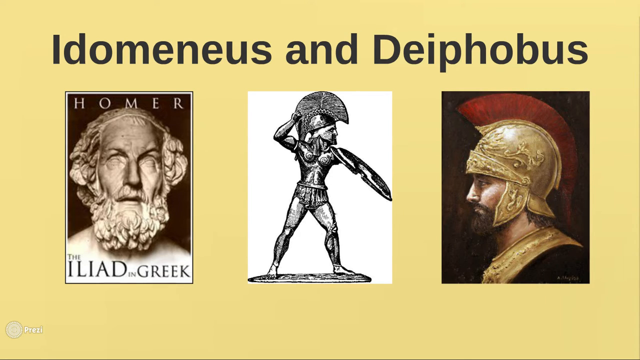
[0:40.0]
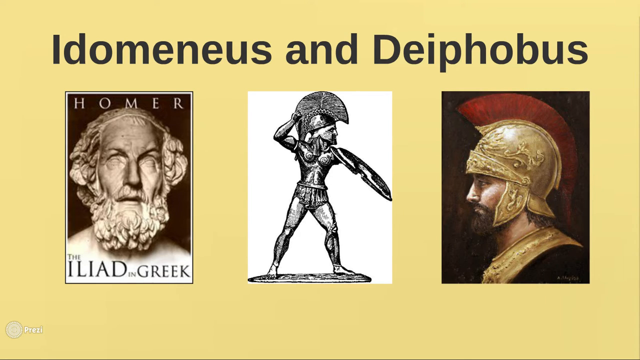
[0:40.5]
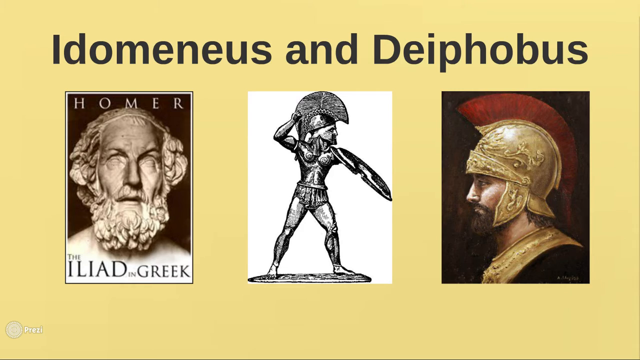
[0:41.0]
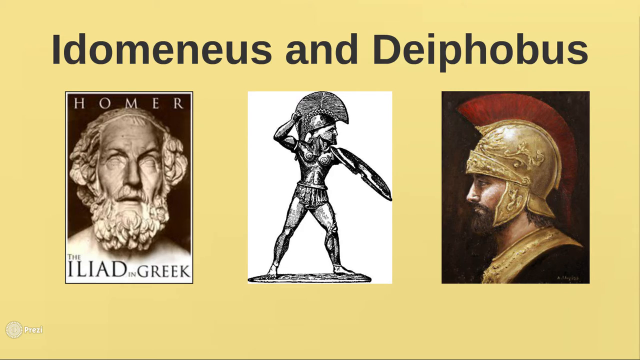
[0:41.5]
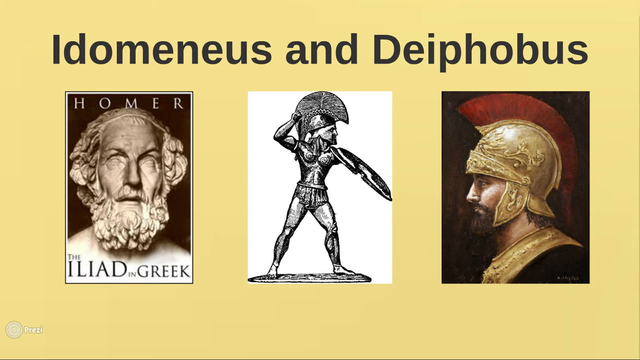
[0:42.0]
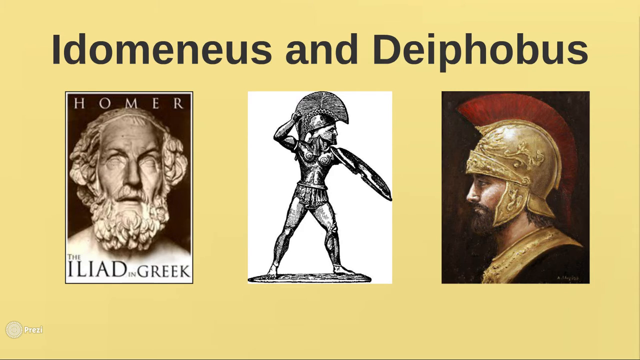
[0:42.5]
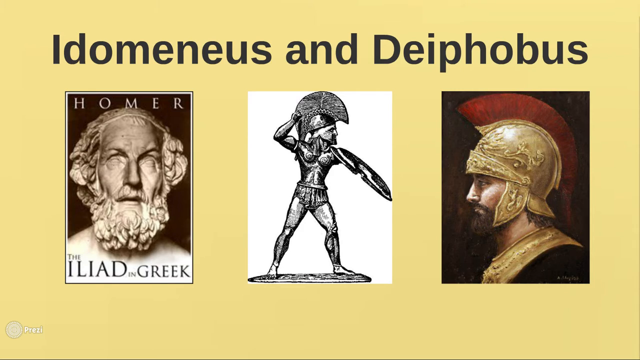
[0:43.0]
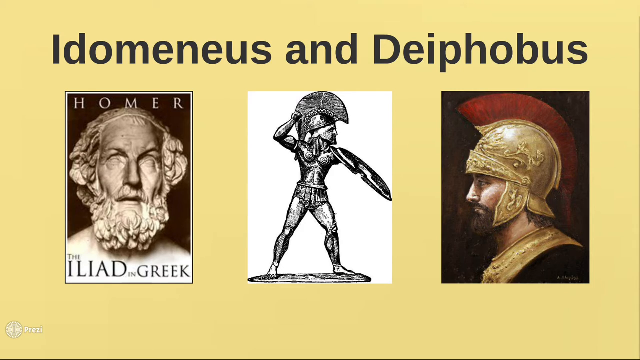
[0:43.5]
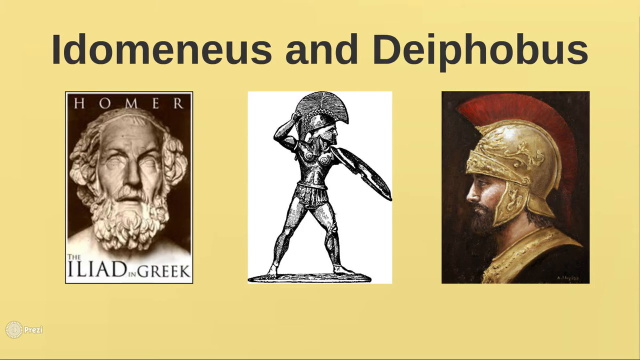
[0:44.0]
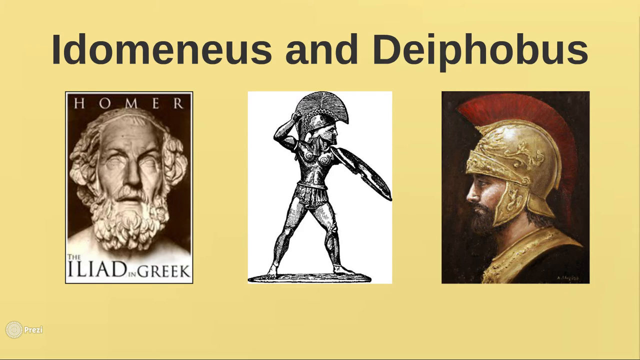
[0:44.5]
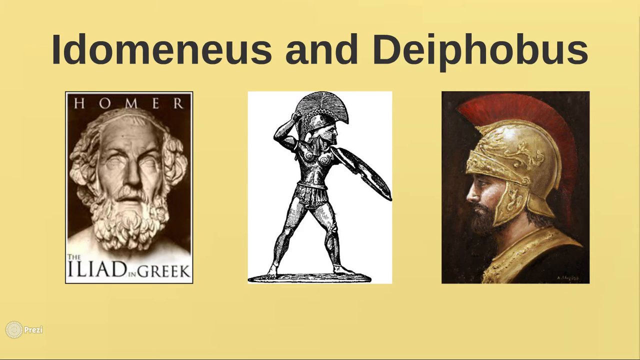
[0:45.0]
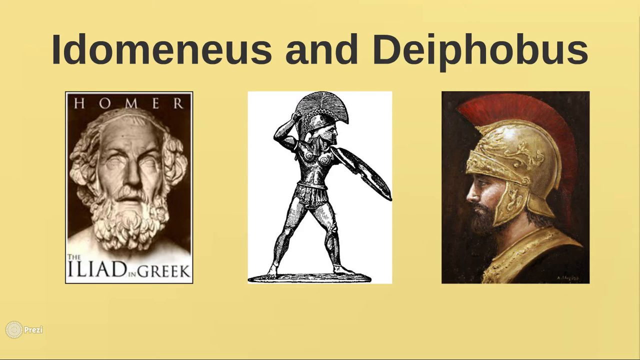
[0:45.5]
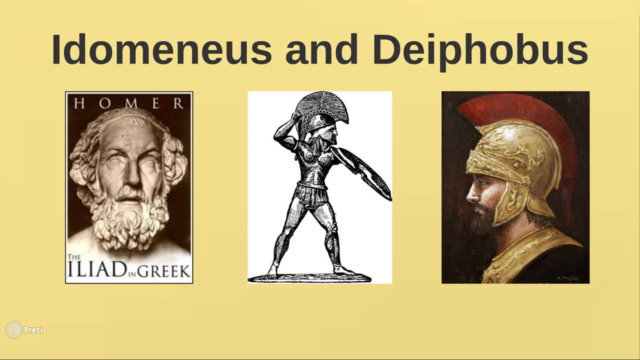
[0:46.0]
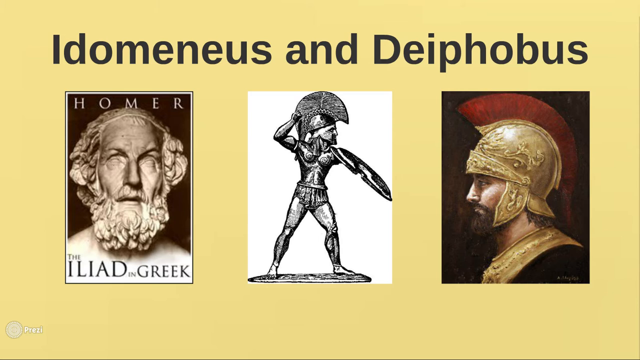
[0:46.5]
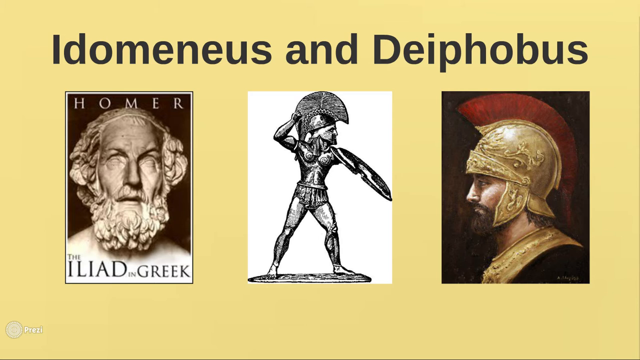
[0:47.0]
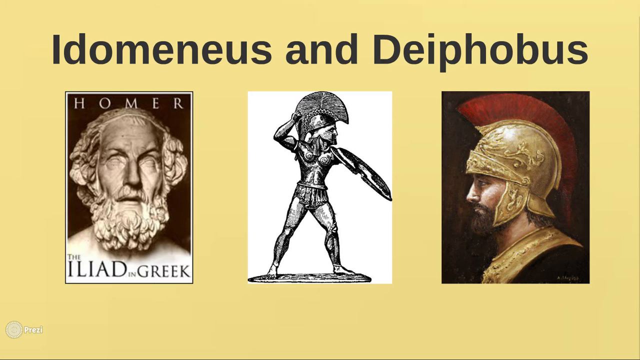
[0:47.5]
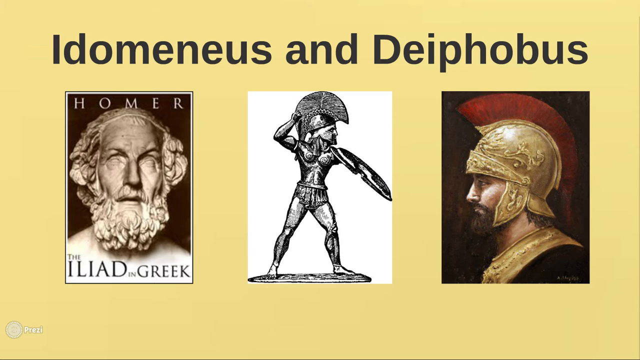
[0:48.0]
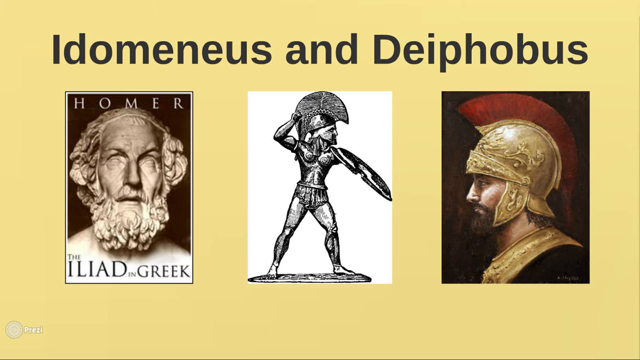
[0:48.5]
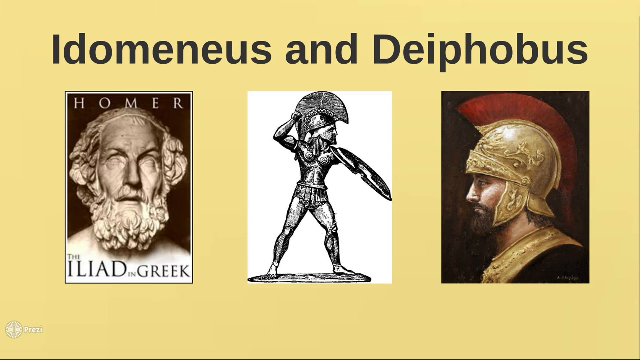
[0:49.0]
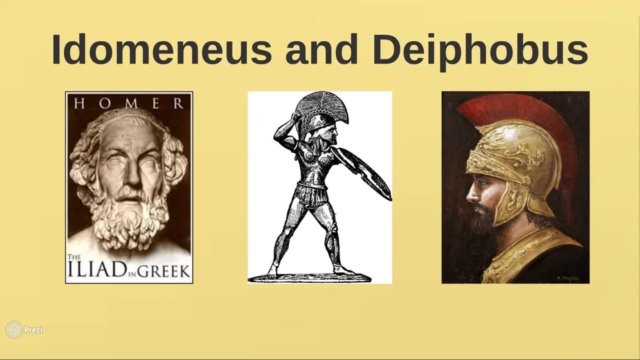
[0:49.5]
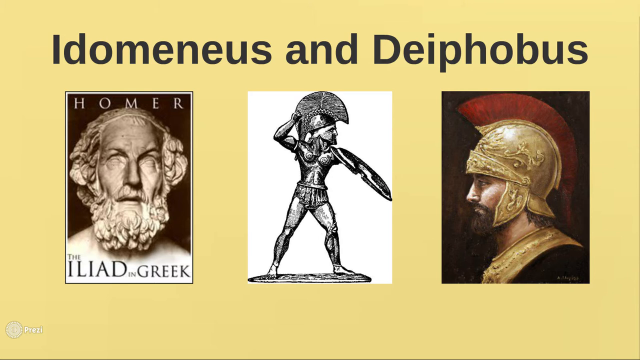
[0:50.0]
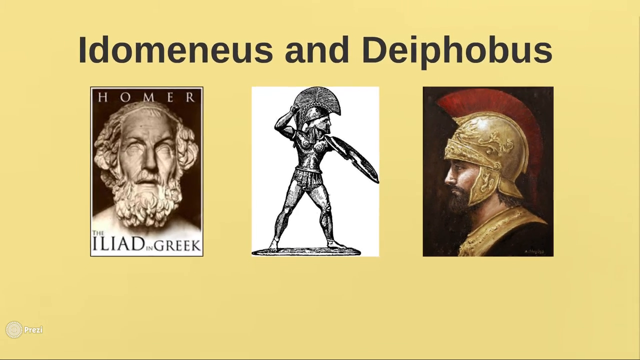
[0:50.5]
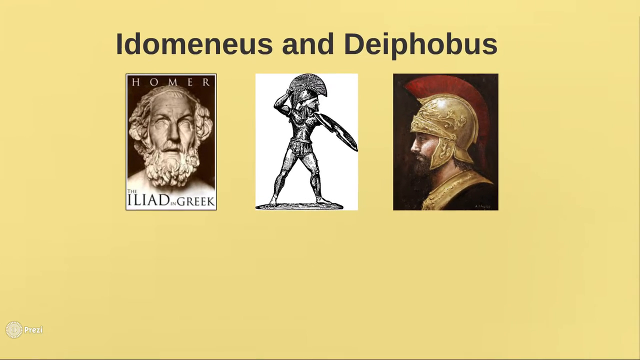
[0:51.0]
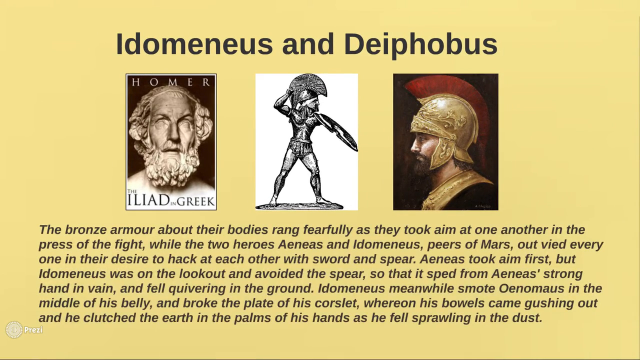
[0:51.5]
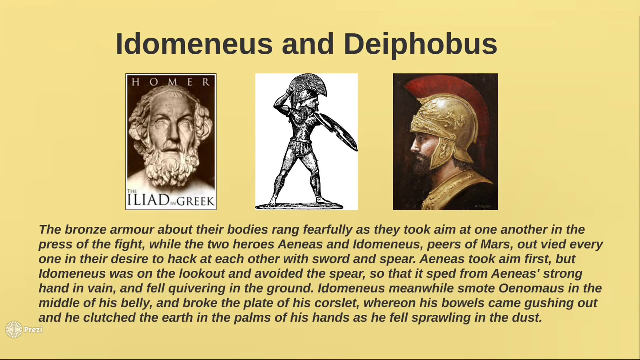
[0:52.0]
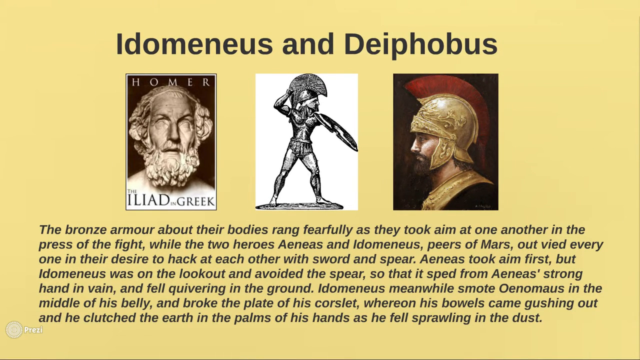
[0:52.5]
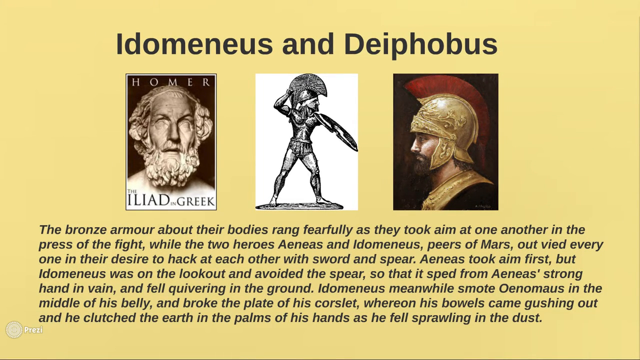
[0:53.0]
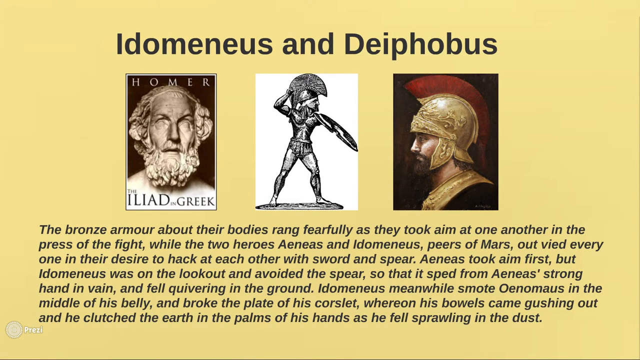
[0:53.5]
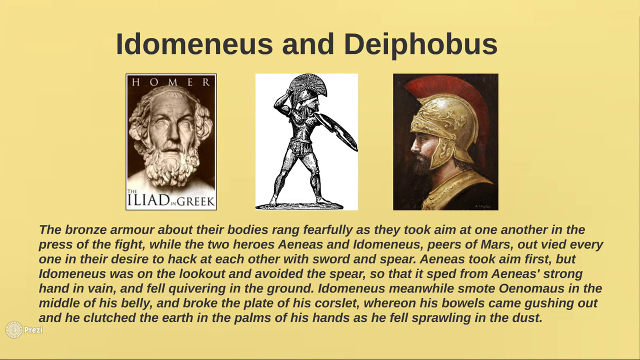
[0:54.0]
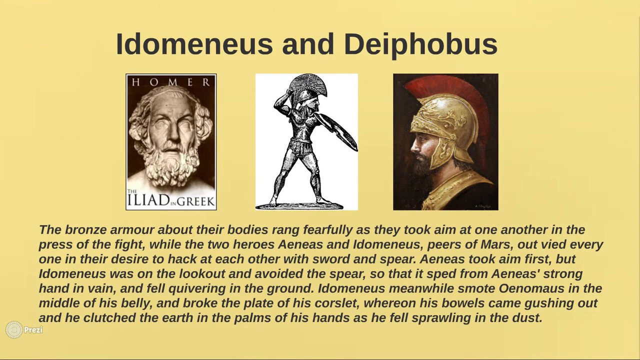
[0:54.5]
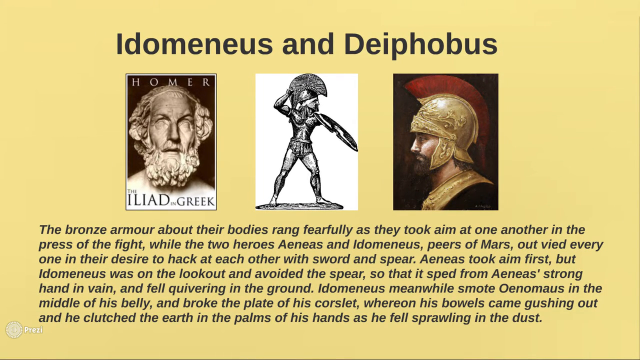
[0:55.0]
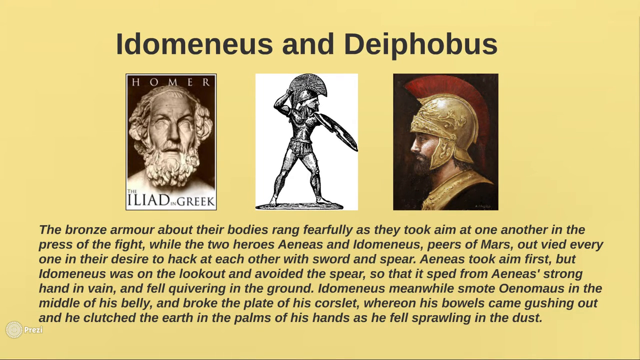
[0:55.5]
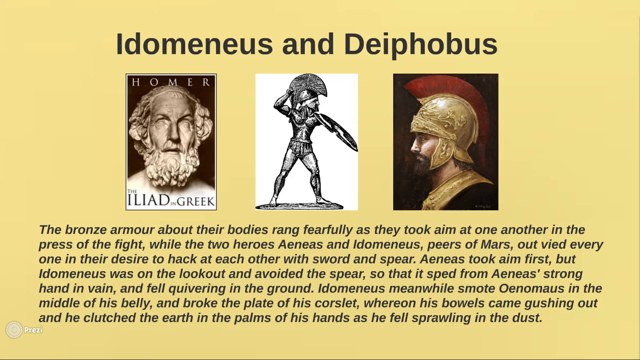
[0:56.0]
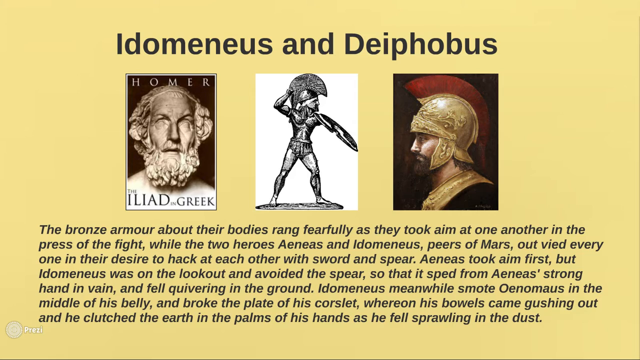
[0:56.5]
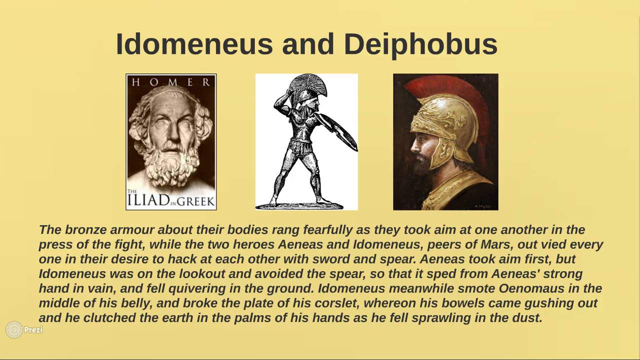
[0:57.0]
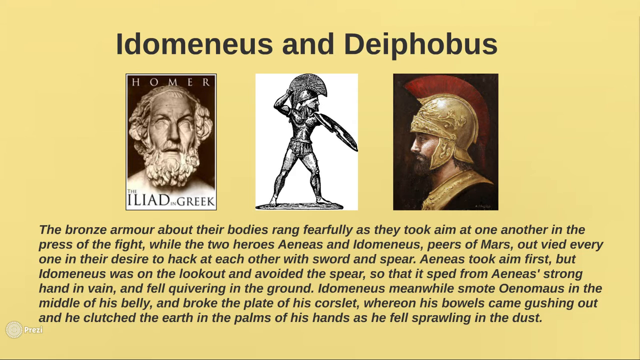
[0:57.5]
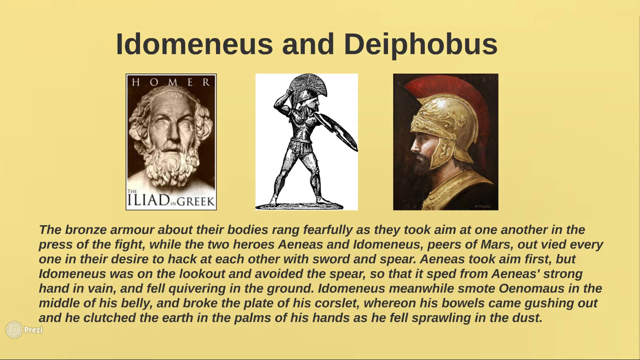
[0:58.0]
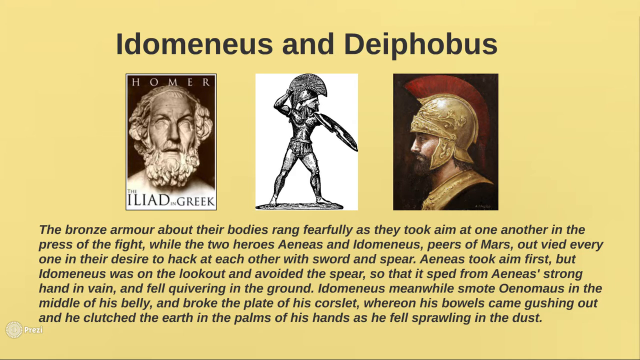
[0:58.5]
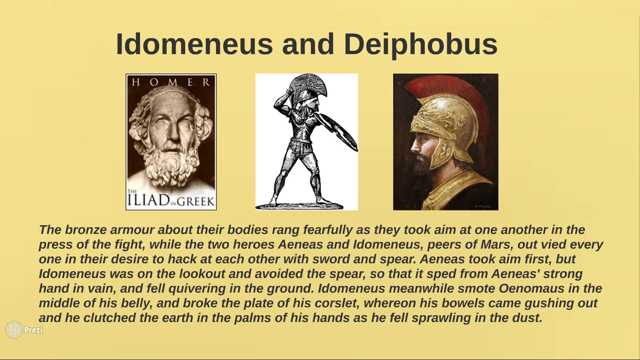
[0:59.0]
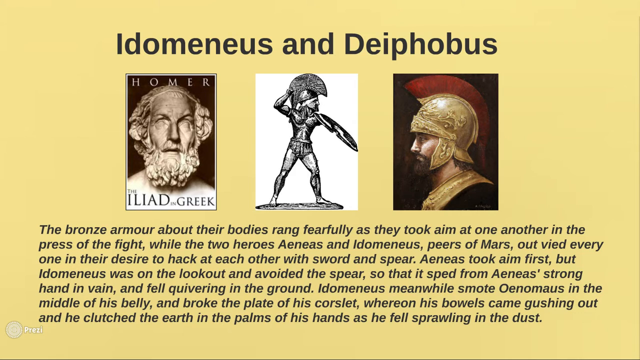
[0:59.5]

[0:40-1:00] Three images in rectangles span the whole screen. At the top is a title in what appears to be a light black, reading "endomenous and diphobus". Below it are the three images: one of Homer, the Iliad in Greek; a black and white image in the center, apparently of a warrior holding a shield up; and a third, apparently also a warrior, against a dark background, wearing a gold helmet with a red mohawk at the top and a gold breastplate or neckplate. The view zooms out, revealing writing at the bottom that tells a little more about the pictures. Then the three images are maximized again so they are very clear and are the only things on the screen.